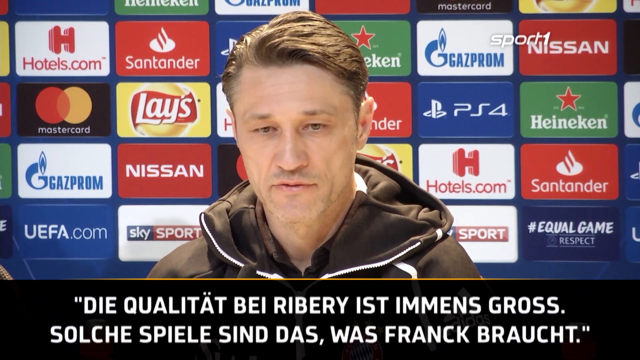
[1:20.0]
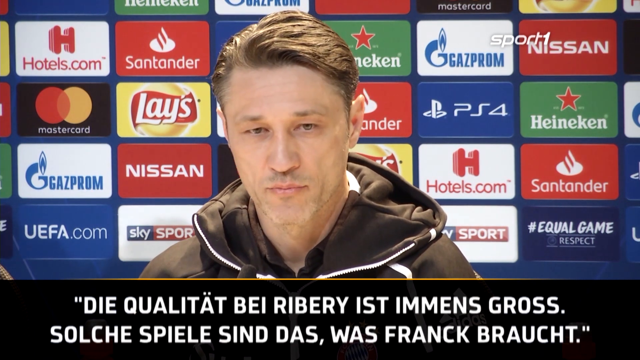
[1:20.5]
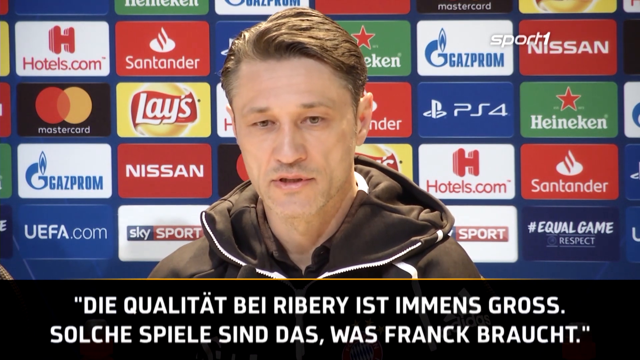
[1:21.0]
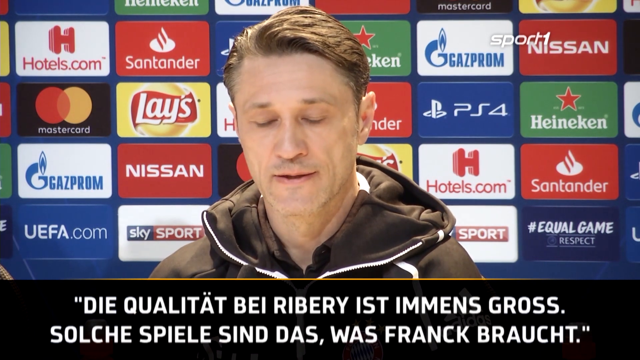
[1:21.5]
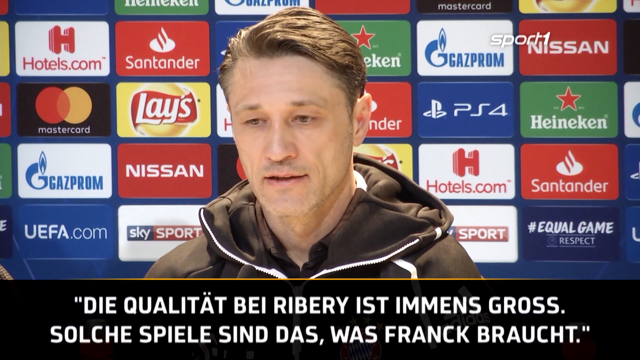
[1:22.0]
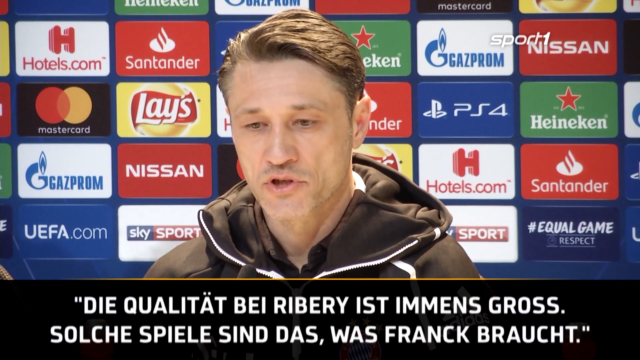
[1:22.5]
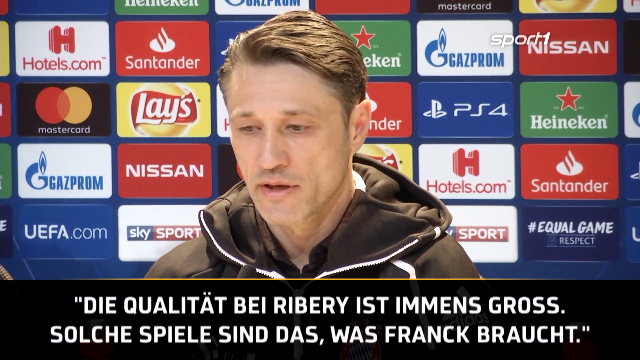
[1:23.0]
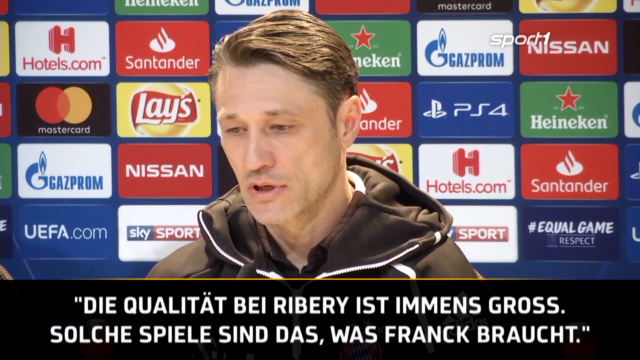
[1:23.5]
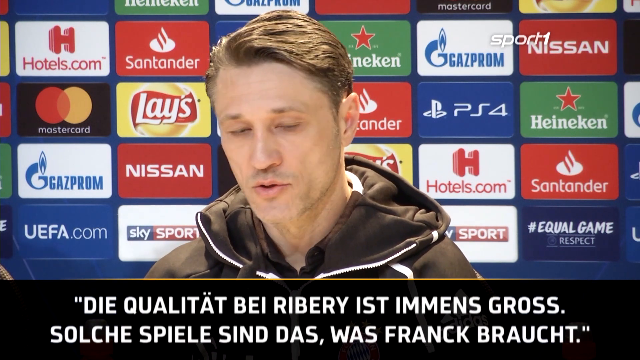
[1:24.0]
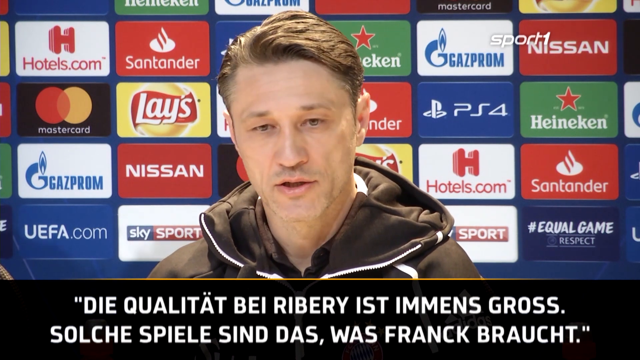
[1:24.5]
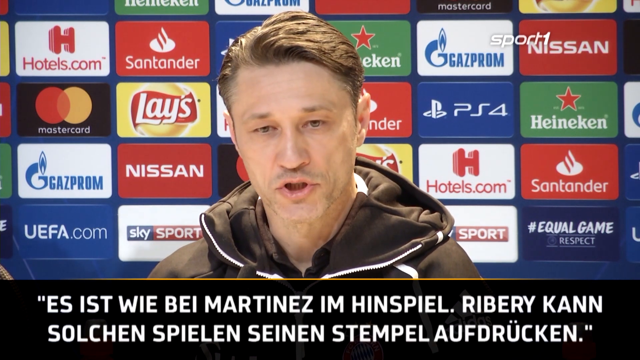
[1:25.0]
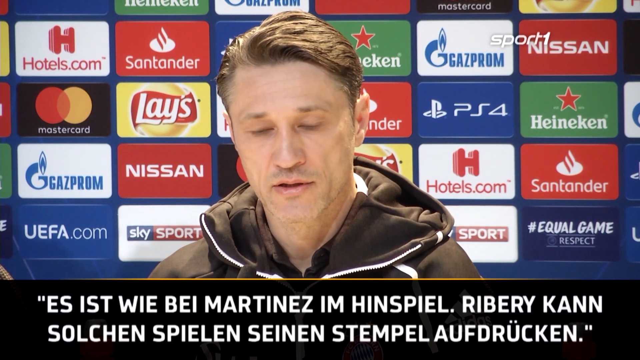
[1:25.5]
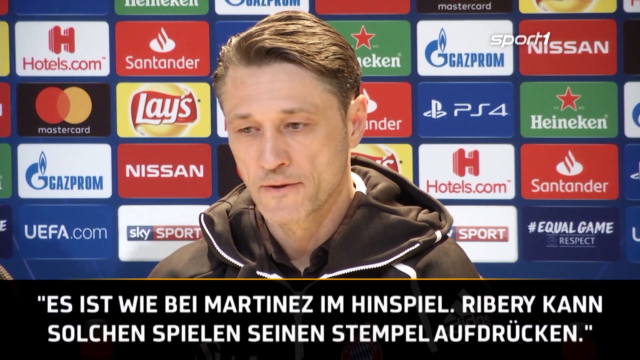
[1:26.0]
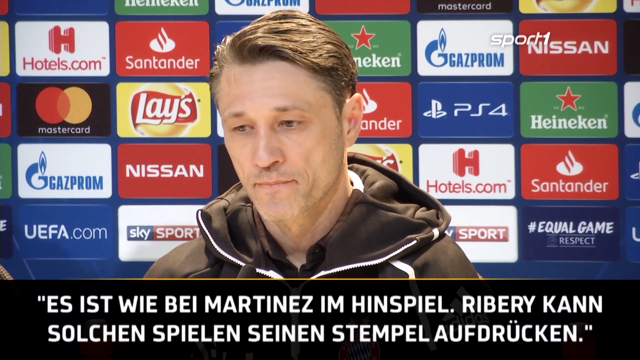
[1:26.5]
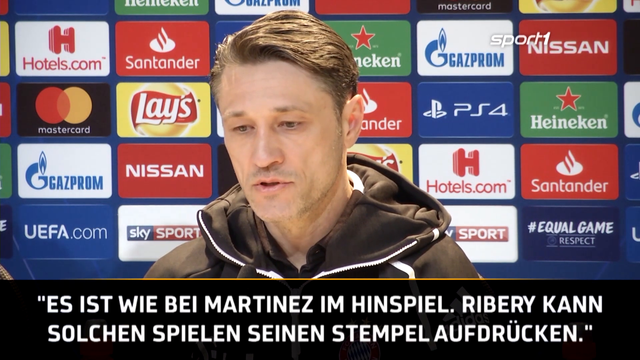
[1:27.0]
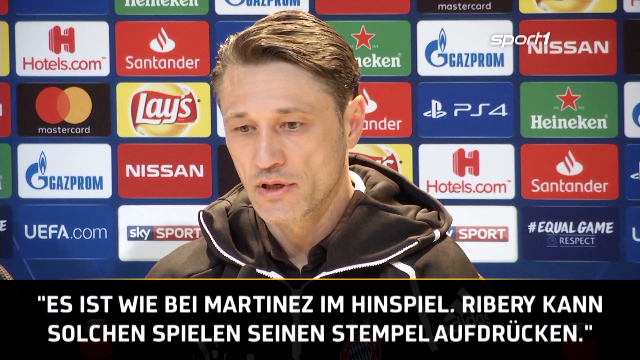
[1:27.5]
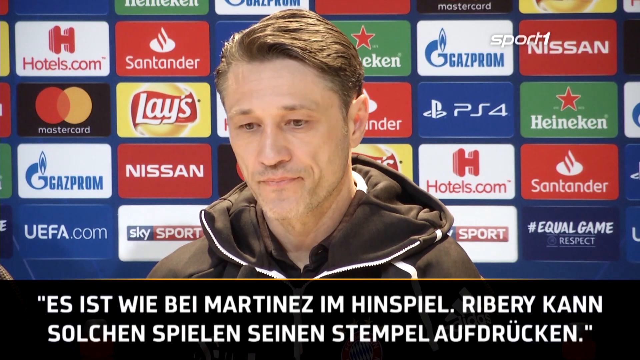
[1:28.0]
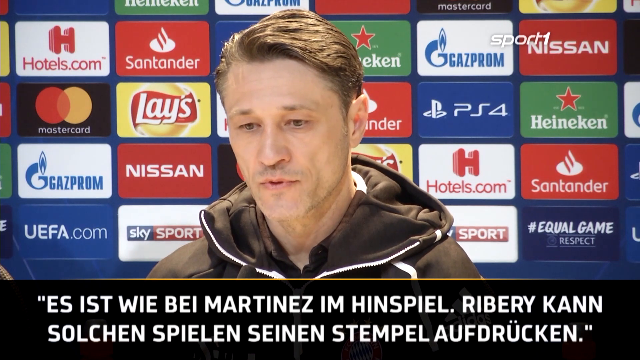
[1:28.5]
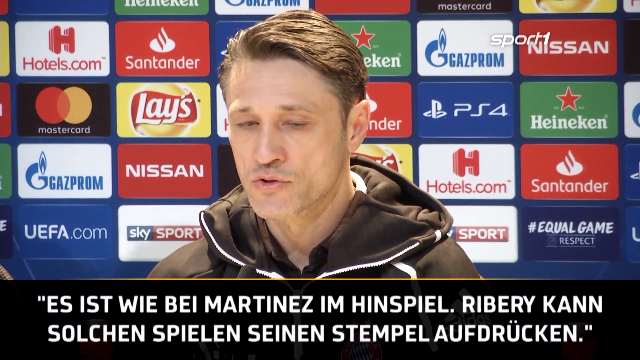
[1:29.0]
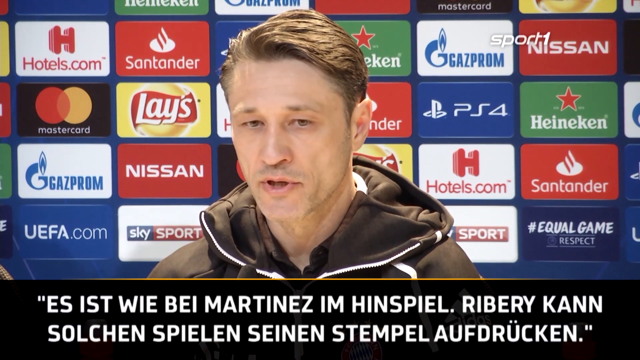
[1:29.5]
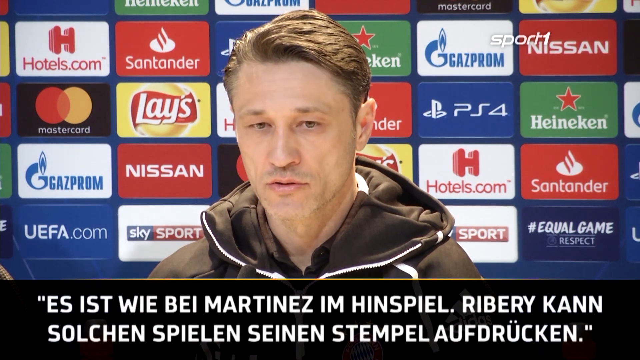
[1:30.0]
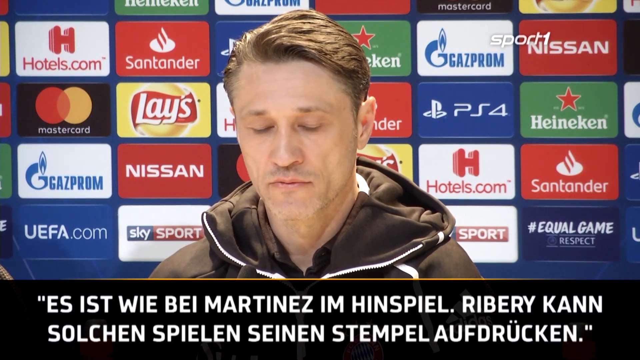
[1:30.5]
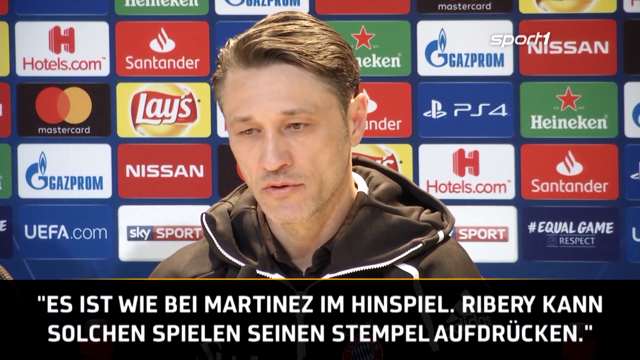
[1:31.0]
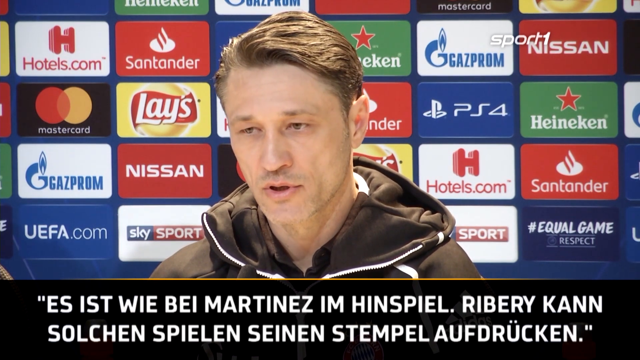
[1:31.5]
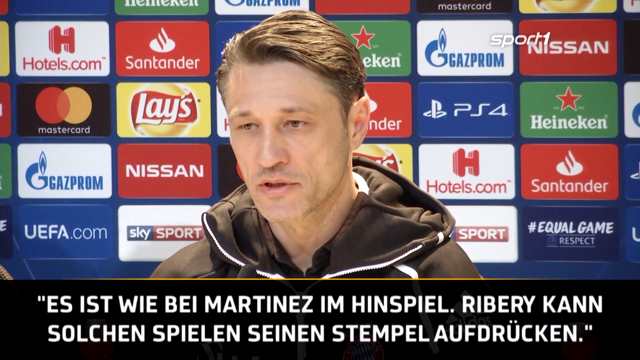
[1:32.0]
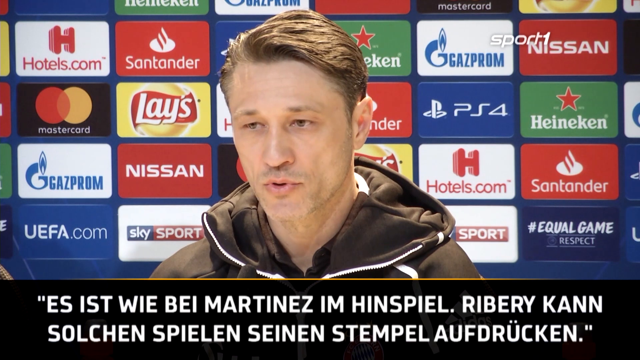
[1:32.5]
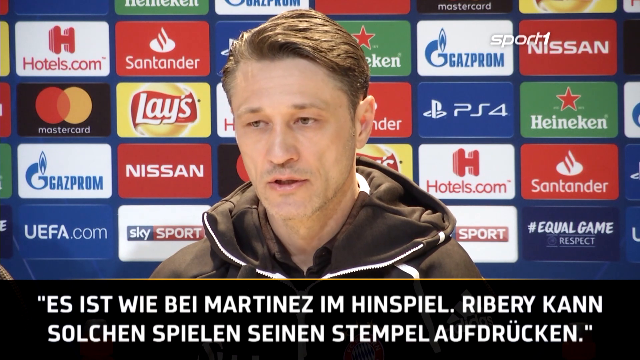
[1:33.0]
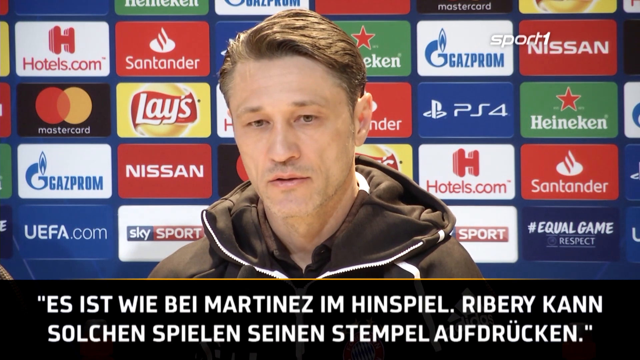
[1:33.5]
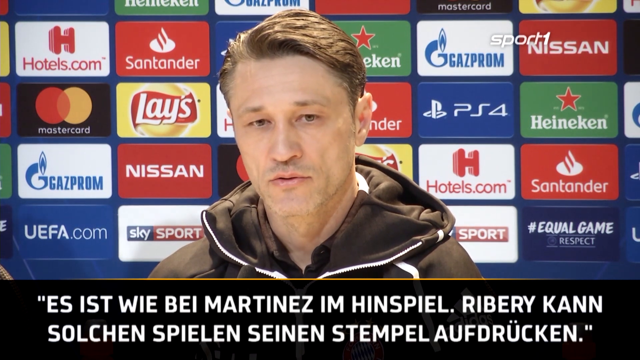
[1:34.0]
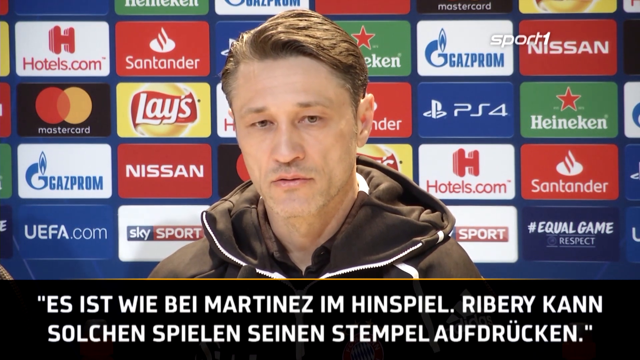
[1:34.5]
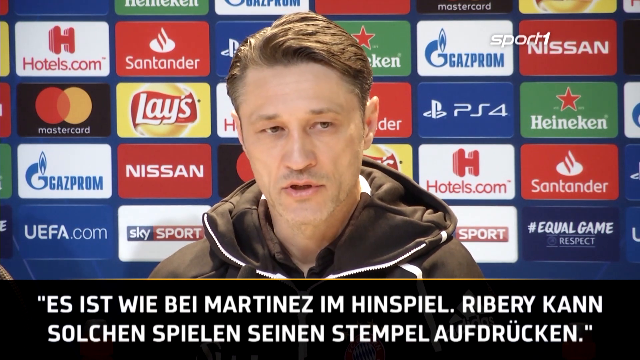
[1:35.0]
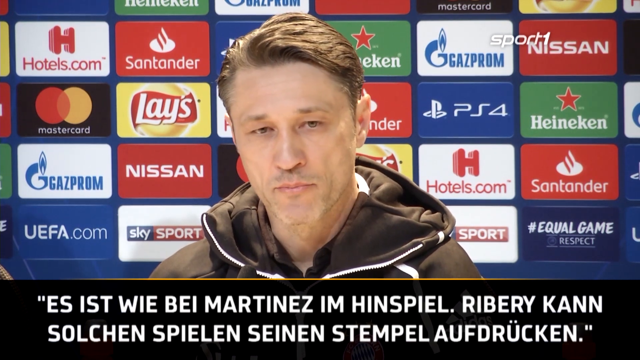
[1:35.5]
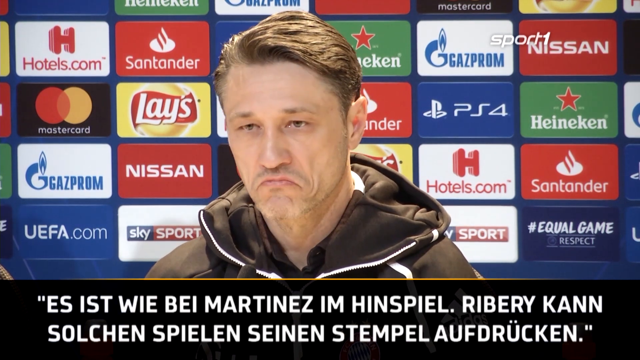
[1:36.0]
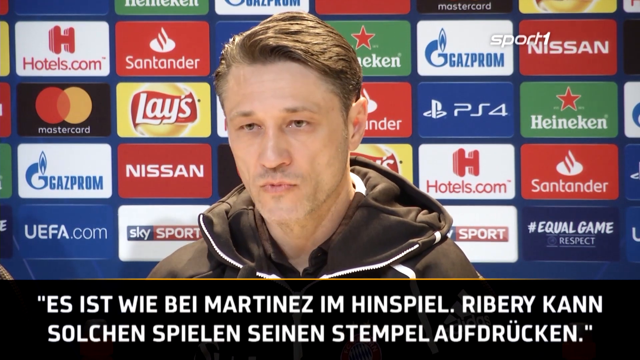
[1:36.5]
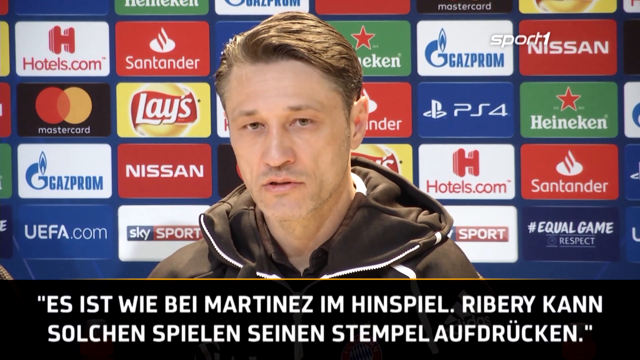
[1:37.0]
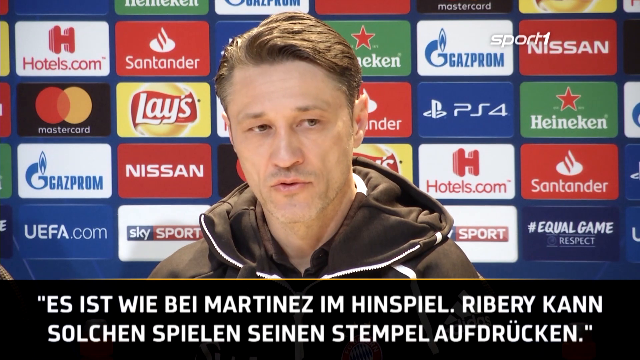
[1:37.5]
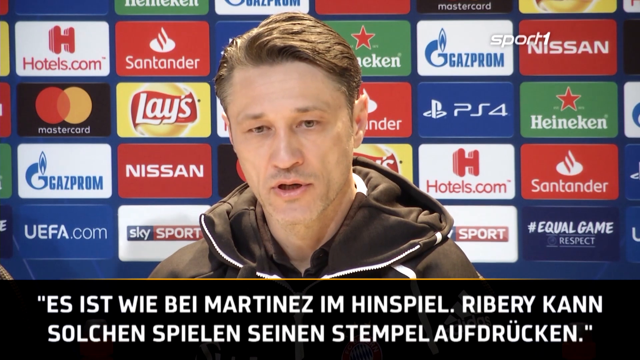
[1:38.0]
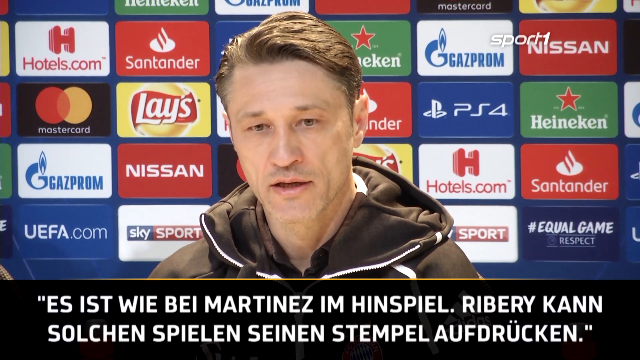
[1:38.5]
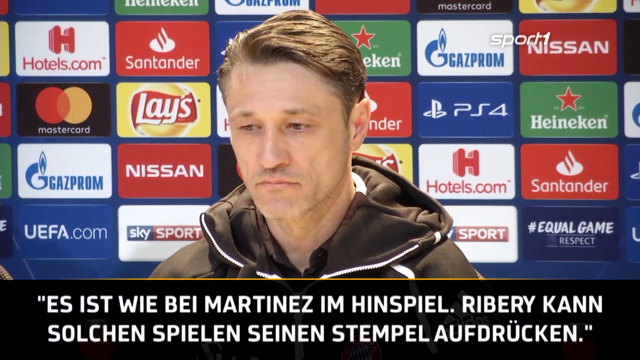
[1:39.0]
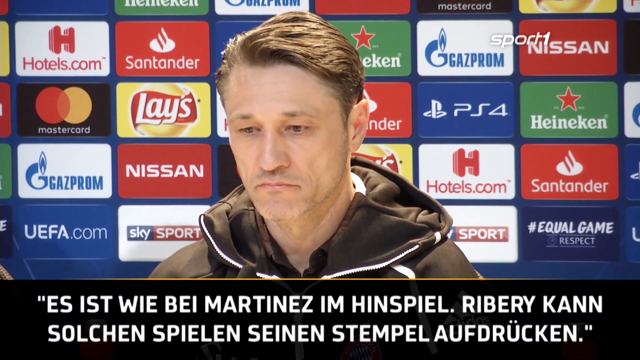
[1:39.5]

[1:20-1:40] A man in a black tracksuit with a hood and white features, including the zipper lining, is seated in front of an ocean blue banner with rectangular advertisements for Nissan, Heineken, Santander, Equal Game Respect, Gazprom, PS4, Hotels.com, Skysports, Lays, Mastercard and Wiffa.com. He appears to be Caucasian, with a large nose, thin lips, dark blonde hair and smaller eyes, and seems very in shape. He is answering questions from the crowd; at the top right of the screen it says "Sport 1", and German translations of what he is saying appear at the bottom. While answering, he nods slightly and shifts his head very slightly to the right, and he seems very confident.